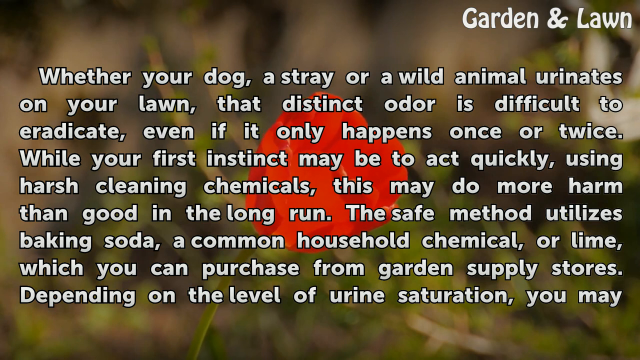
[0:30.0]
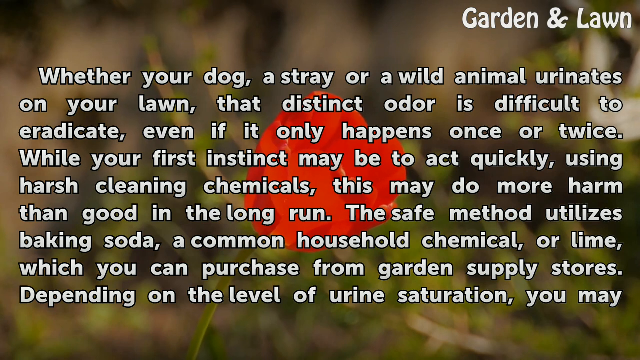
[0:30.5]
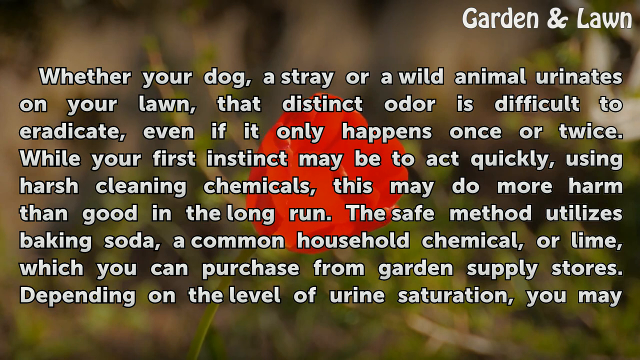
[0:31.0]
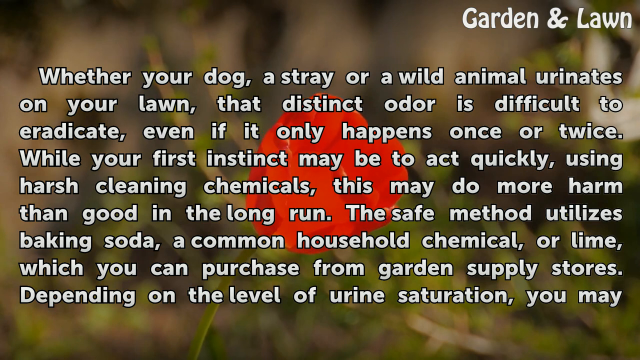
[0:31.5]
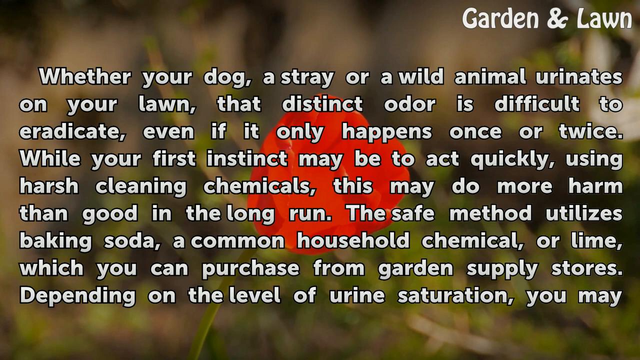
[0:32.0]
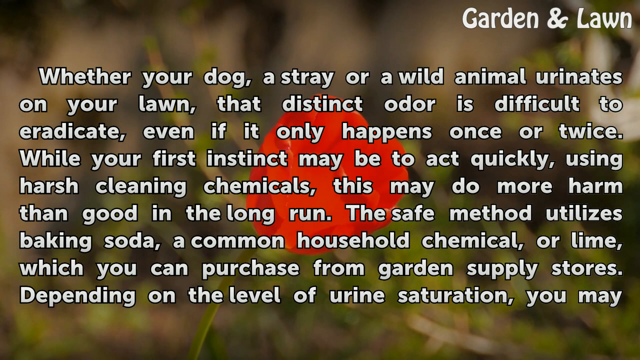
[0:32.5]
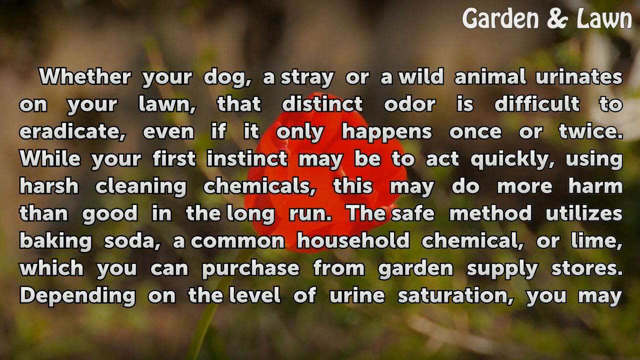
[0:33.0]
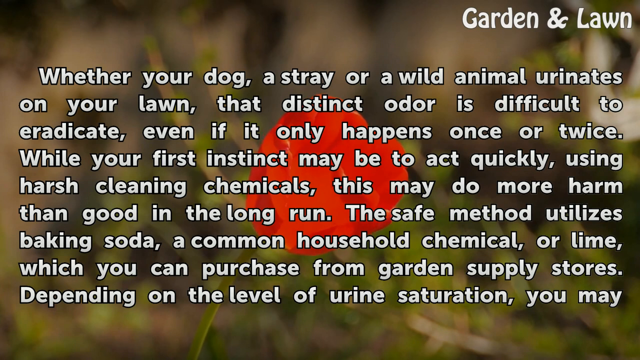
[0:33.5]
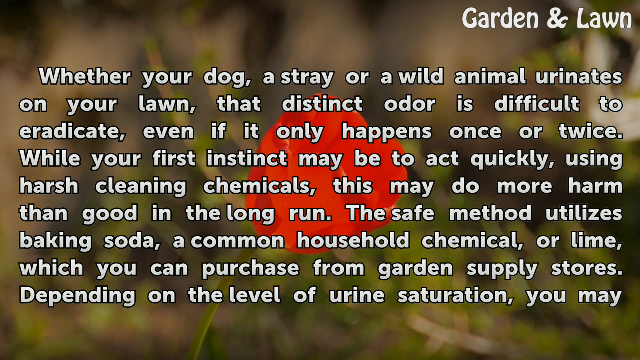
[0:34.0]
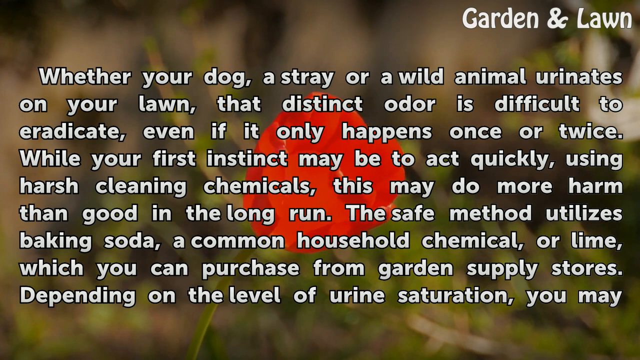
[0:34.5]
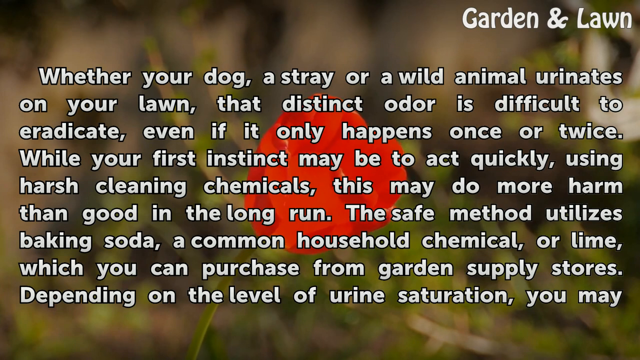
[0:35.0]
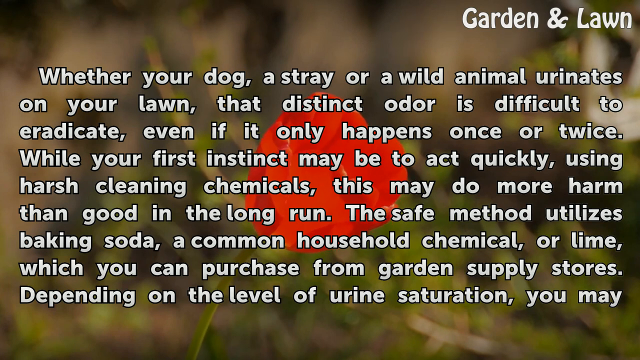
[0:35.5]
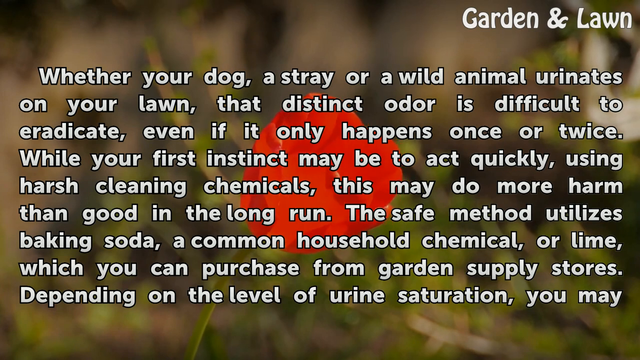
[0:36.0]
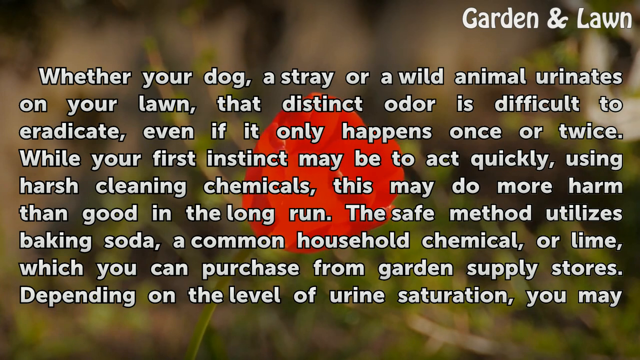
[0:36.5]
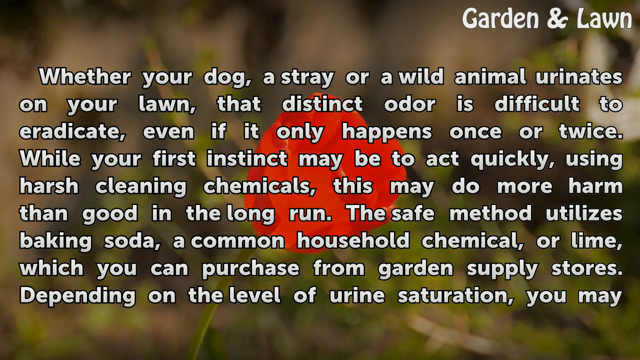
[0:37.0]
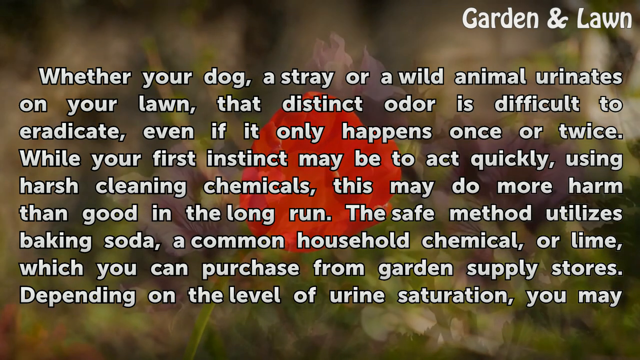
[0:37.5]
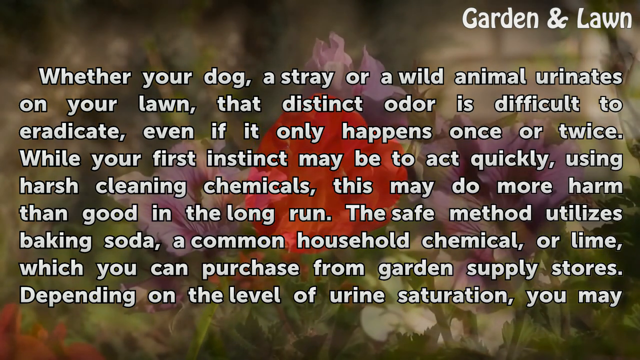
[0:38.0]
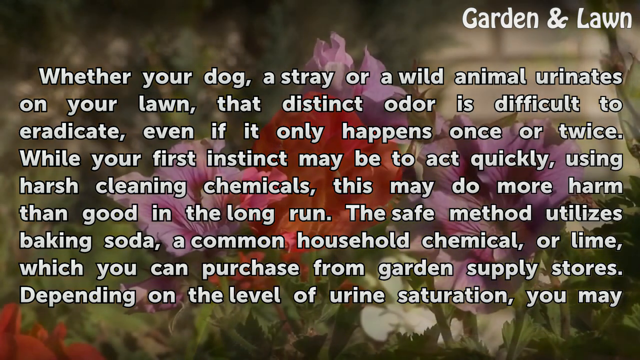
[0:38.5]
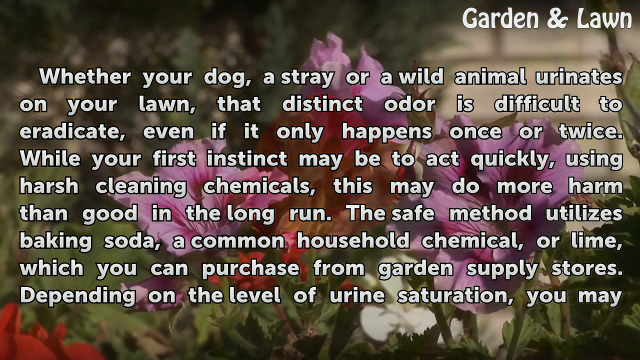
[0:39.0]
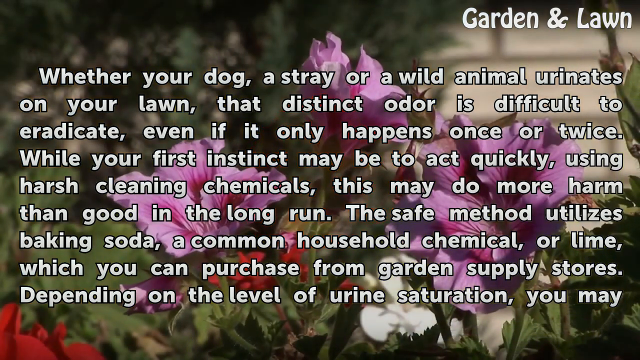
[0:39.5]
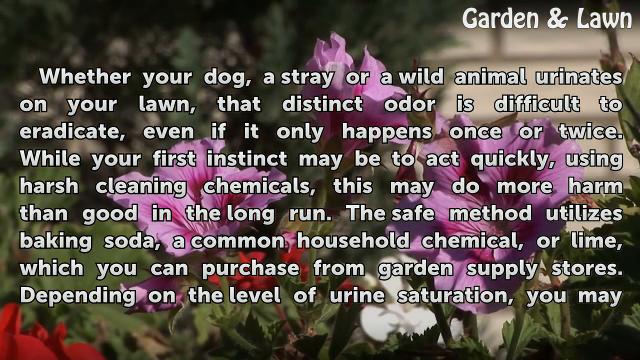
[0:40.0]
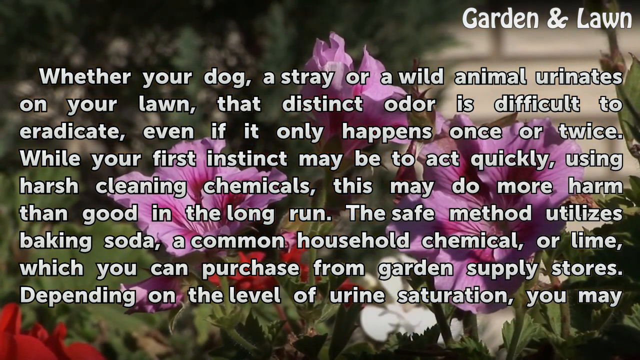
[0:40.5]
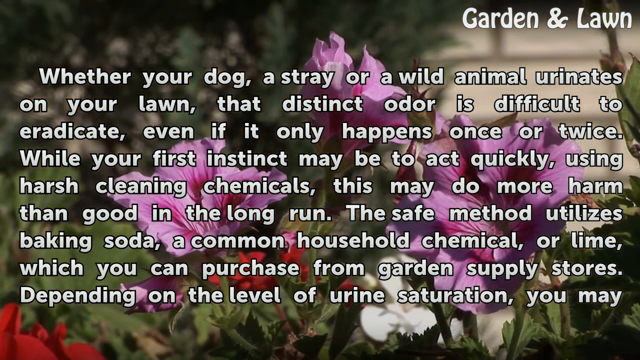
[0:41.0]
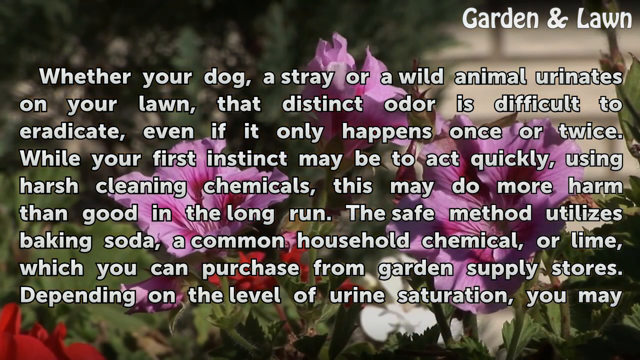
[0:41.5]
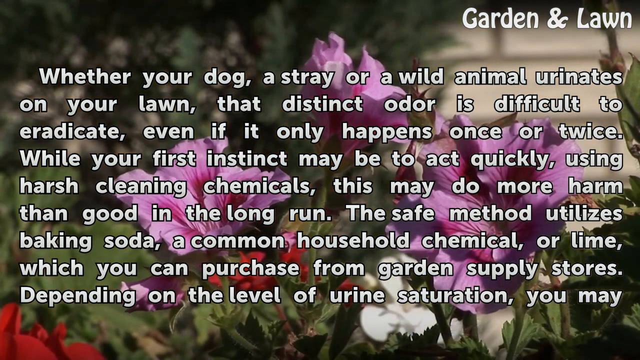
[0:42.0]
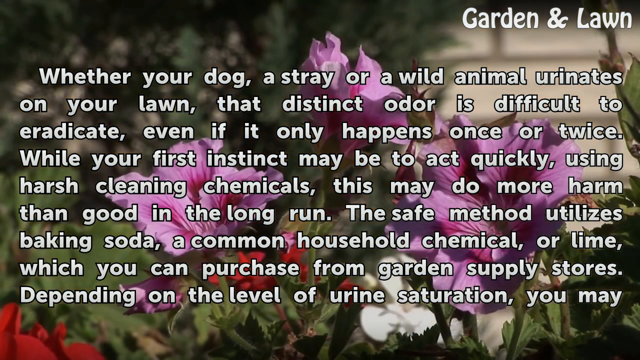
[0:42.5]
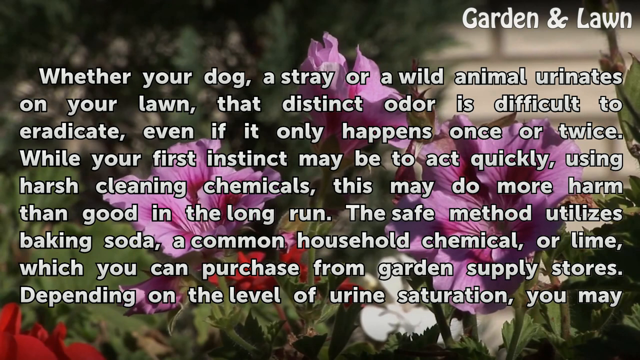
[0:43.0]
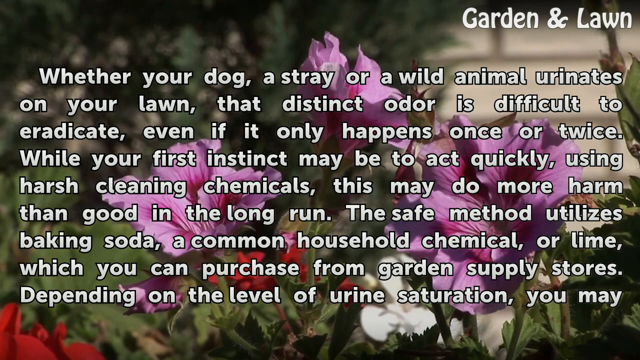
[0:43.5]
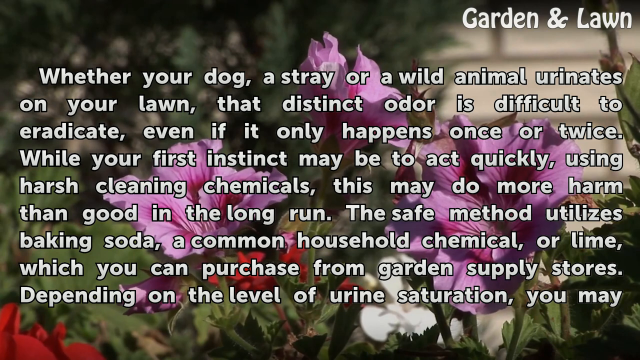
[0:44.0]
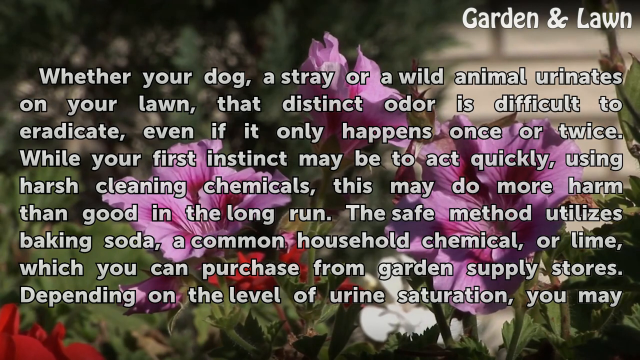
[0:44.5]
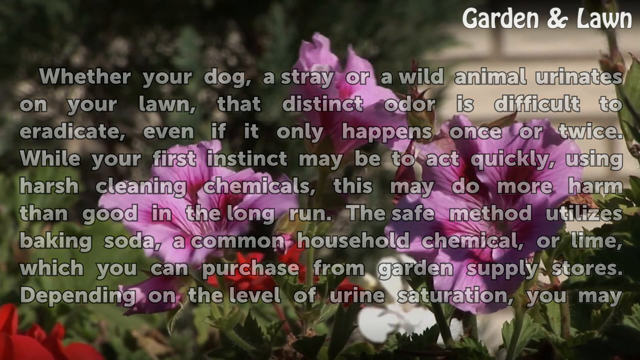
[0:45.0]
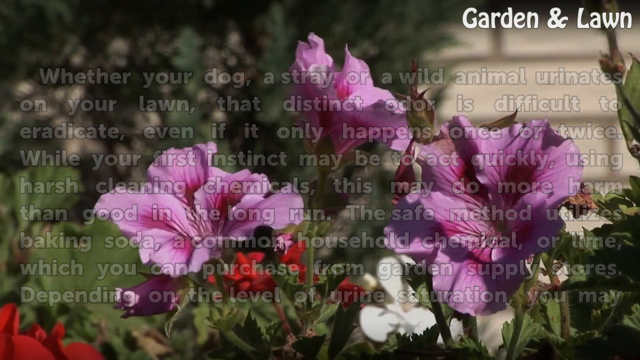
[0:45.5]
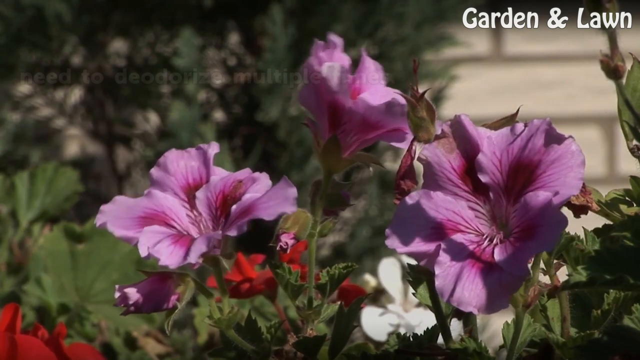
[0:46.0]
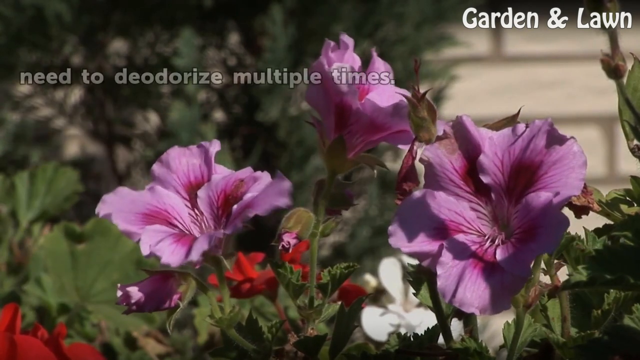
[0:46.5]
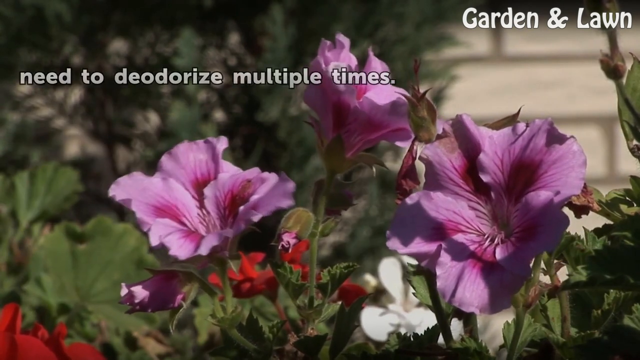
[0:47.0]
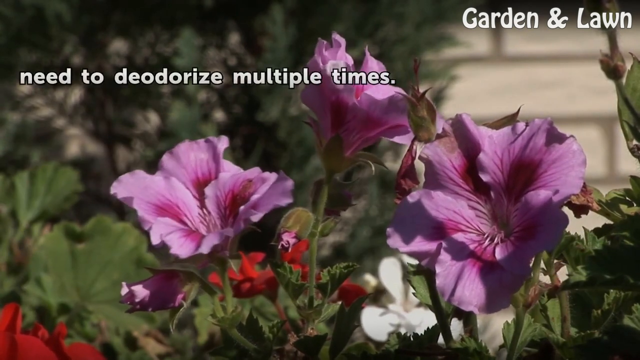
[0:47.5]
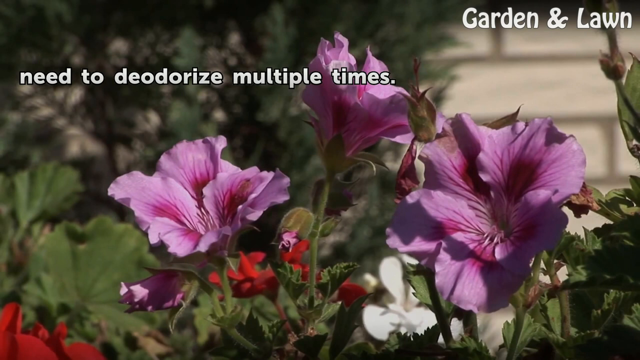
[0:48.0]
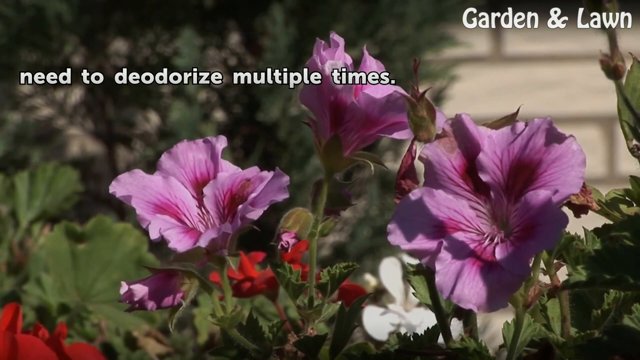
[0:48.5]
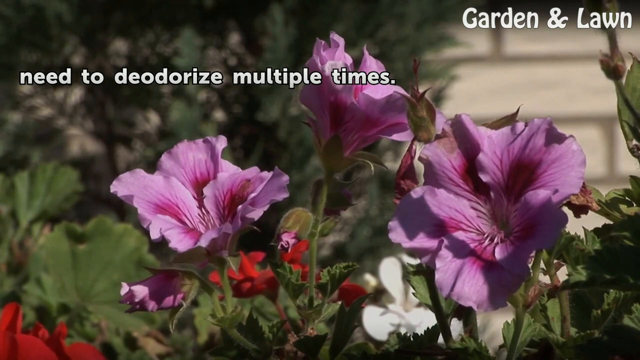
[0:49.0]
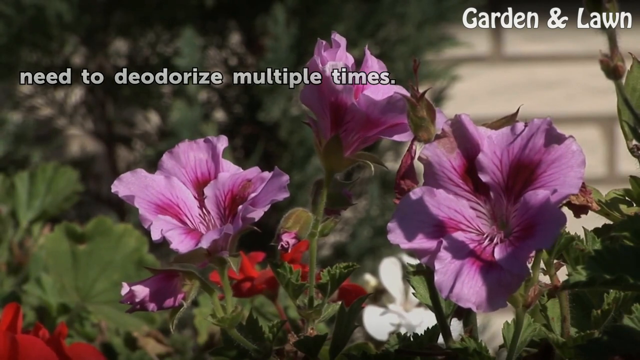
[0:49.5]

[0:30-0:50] The flower is not very detailed; it looks like it has something pixelated over it, and the contrast is lacking, so fine detail is hard to see. Outlines of the petals are visible, layered and coming up into a ball, with the stem curving down and slightly to the left. A breeze blows the flower a little. The "Whether your dog" line is still centered at the top. About four or five different clusters are visible, some purple, with stems coming down with leaves. Underneath the one on the left, a smaller one goes off to the side, looking almost enclosed, and it shakes in a circular fashion in the wind. On the right side, one is on top of another, and one at the top has a slightly darker petal in the middle. The large block of text then goes away and new text about being deodorized multiple times appears, over the same three clusters of purple flowers.